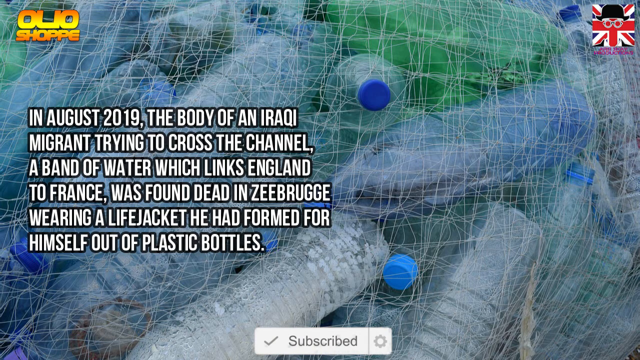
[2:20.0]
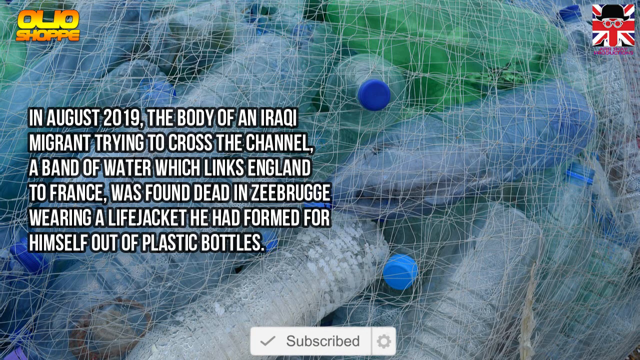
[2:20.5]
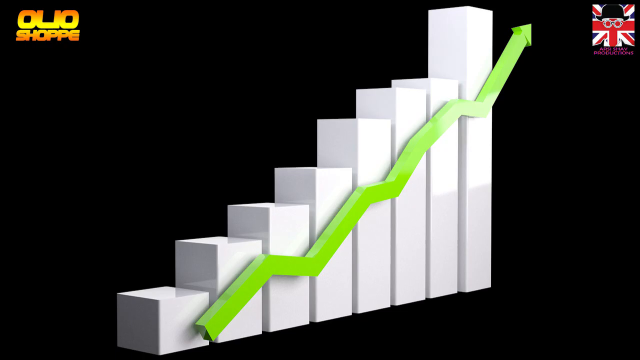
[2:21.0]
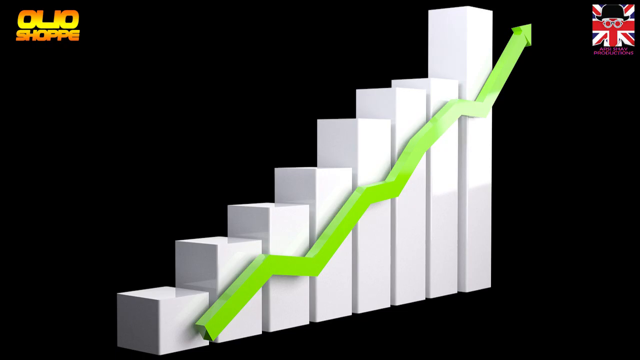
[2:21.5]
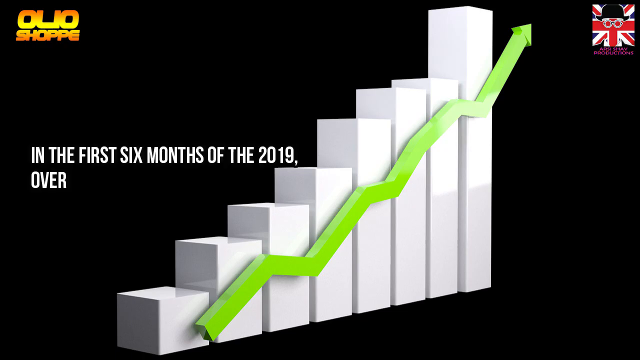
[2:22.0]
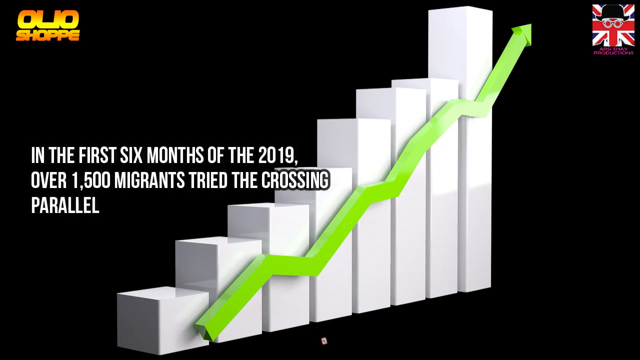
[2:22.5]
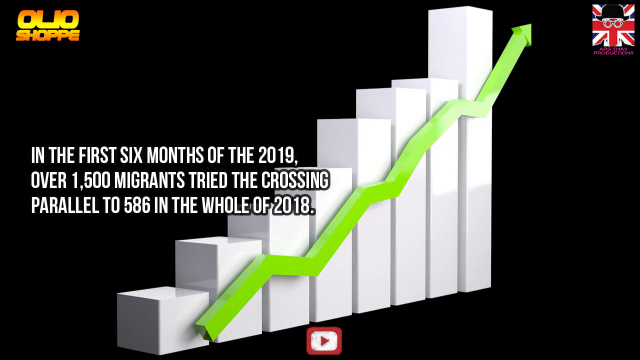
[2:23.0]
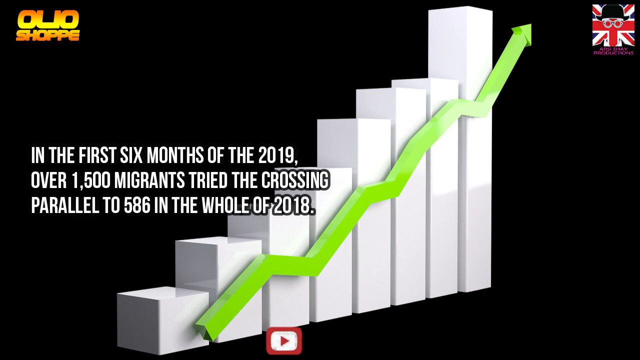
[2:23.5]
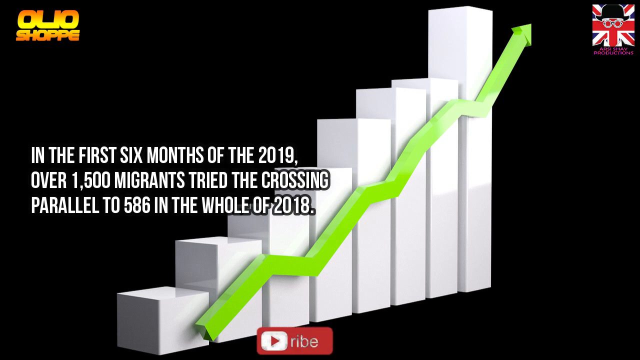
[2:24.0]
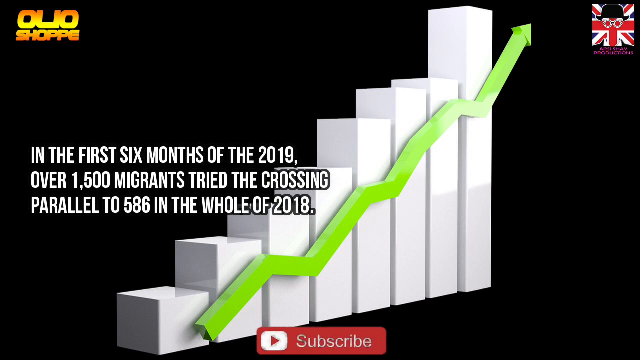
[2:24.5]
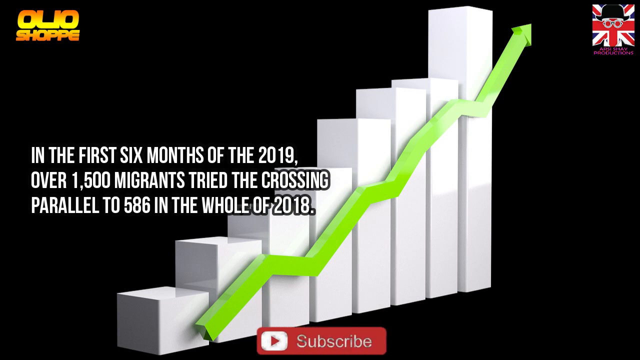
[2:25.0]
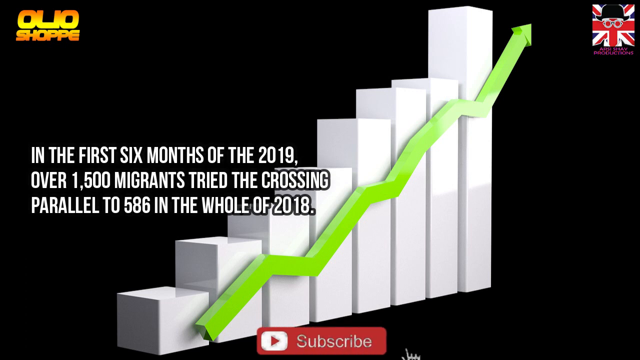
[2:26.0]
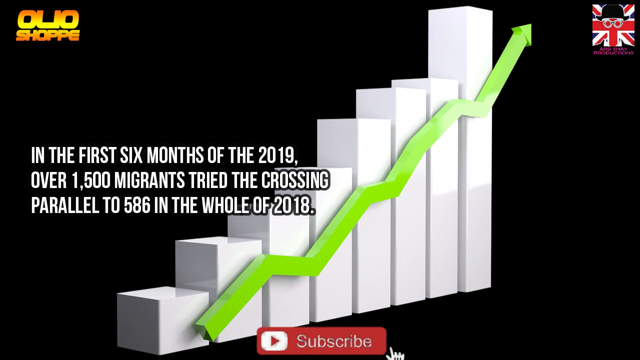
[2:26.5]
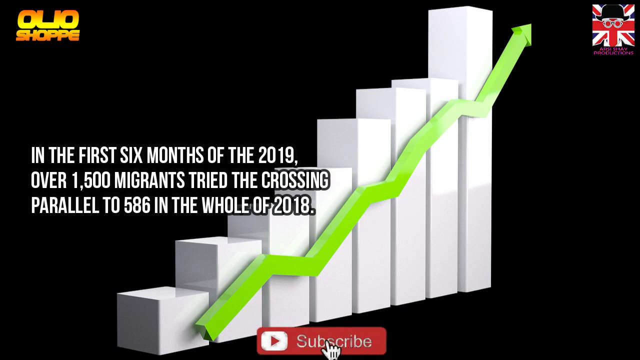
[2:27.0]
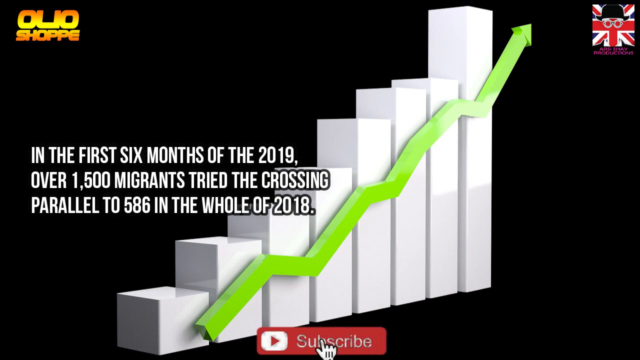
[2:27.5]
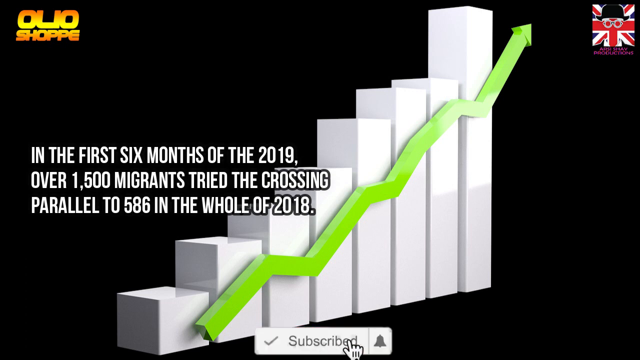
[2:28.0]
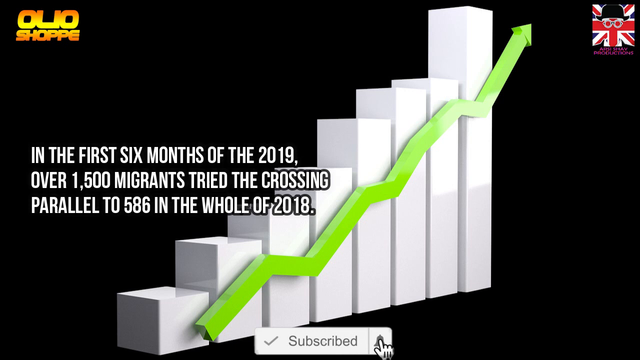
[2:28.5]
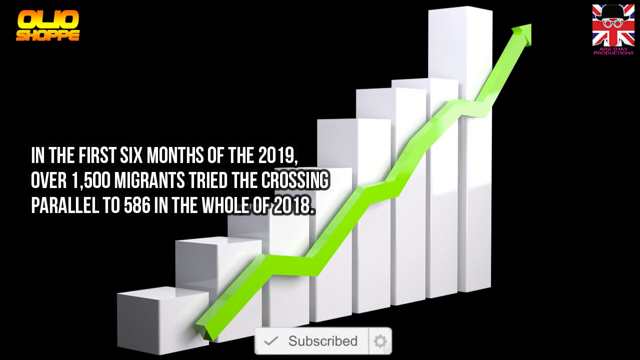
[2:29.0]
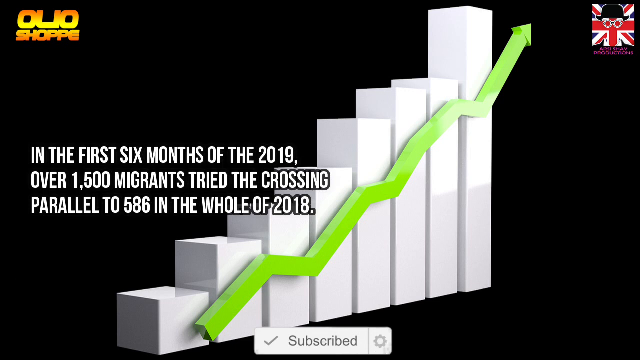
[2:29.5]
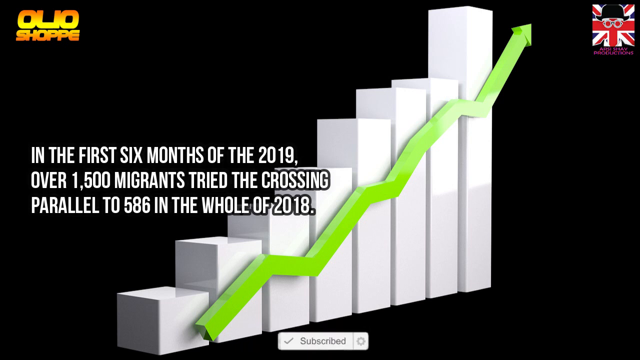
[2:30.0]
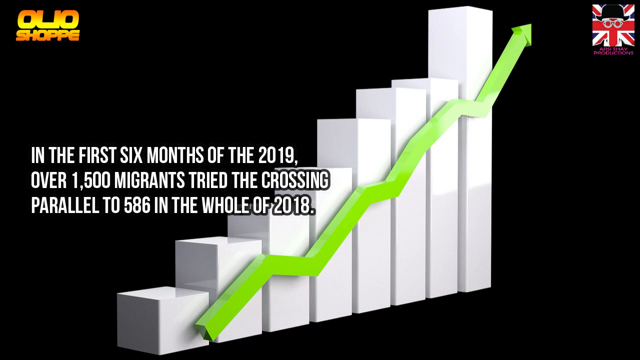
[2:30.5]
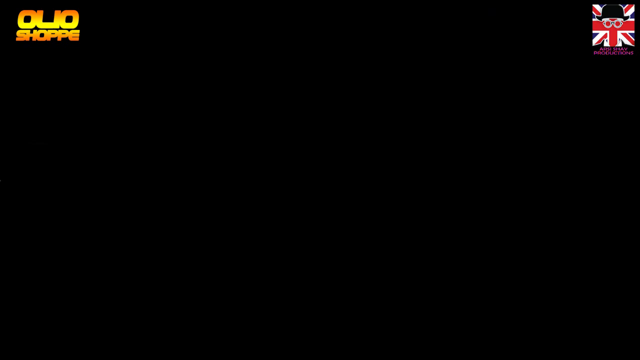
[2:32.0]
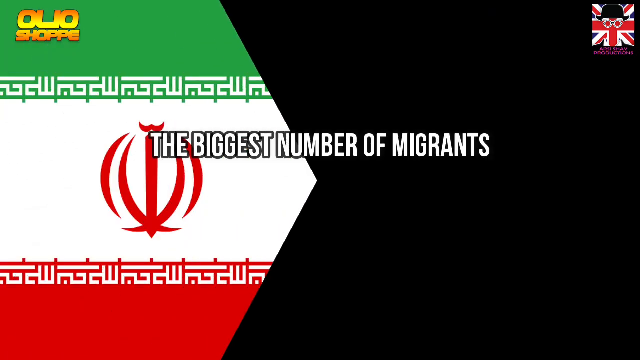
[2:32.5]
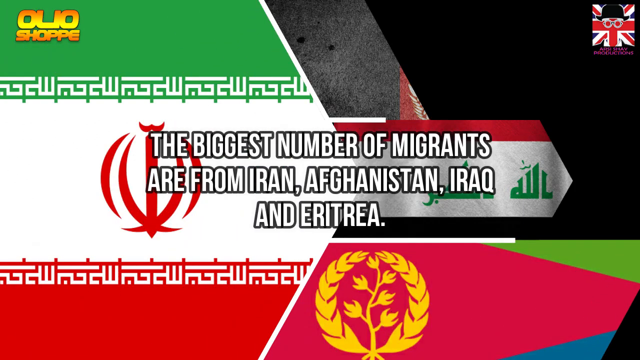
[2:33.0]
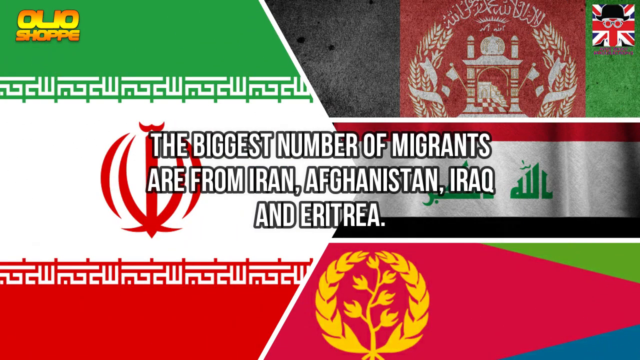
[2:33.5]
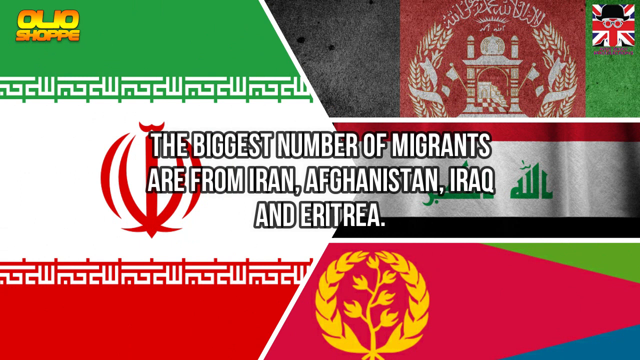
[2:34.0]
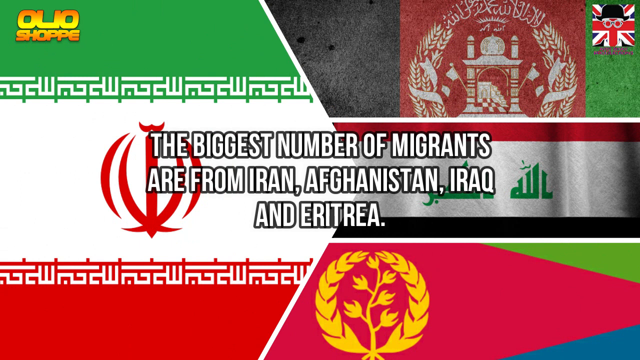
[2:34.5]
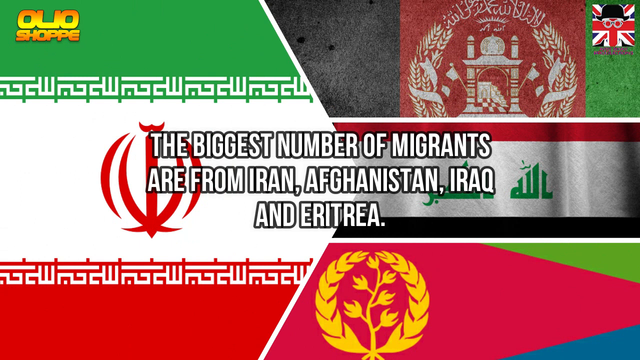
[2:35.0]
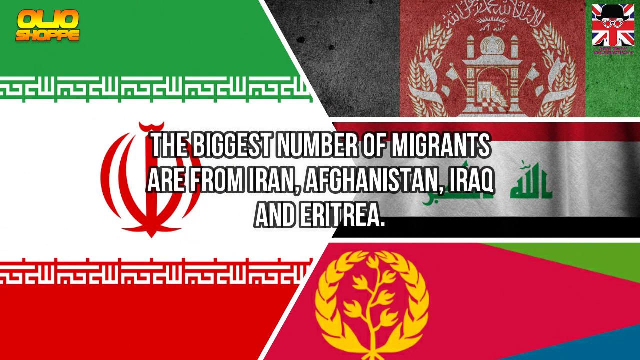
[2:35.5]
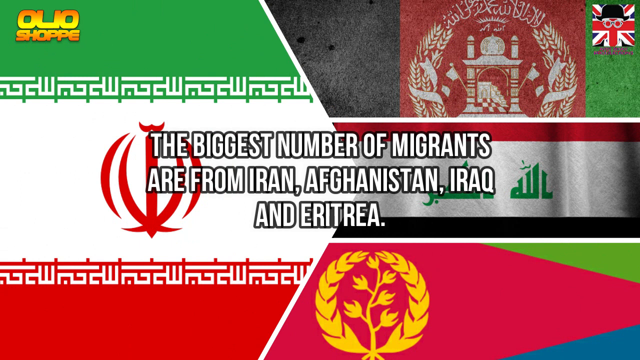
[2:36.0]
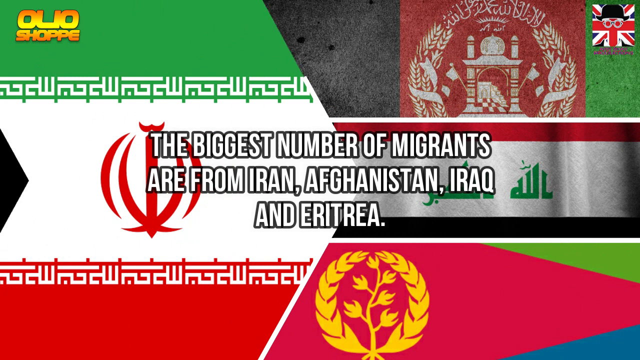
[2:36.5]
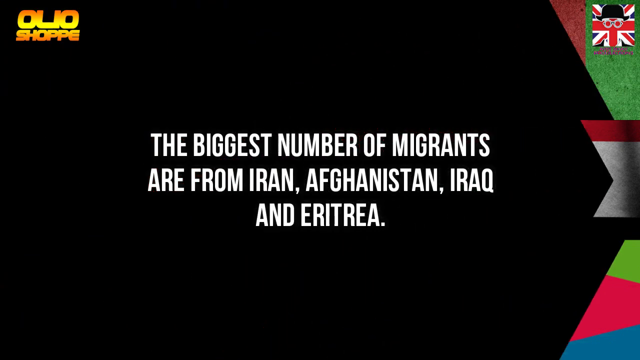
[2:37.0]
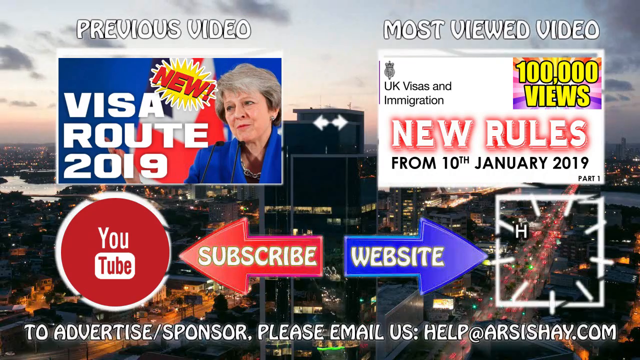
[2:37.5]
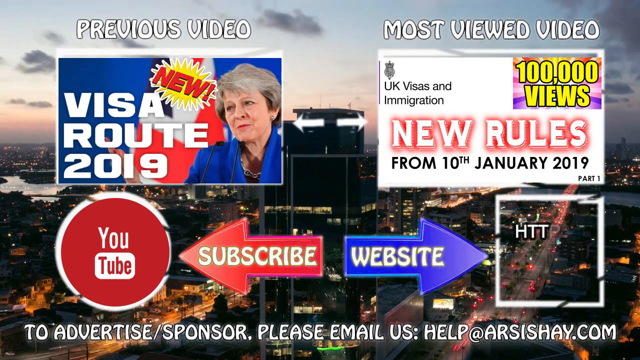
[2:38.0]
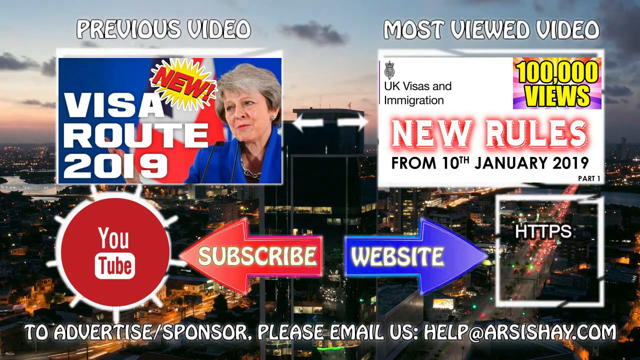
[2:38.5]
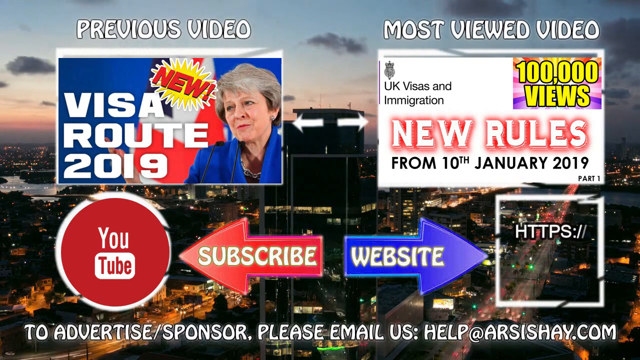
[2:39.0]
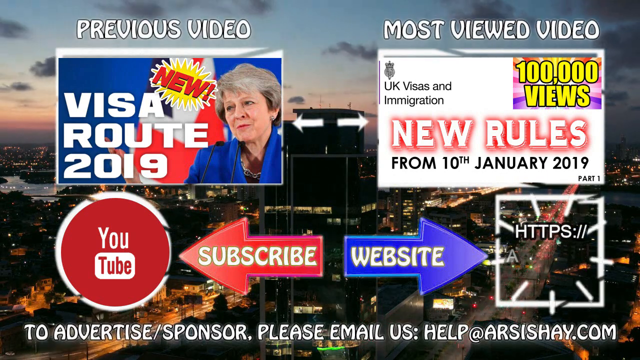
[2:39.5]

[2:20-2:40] A three-dimensional bar graph appears: white bars rising progressively, with a green arrow over them pointing upward as the trend rises. The graph is angled back a little, as if its right side has been pushed back, so it is not a straight side view, and it sits on a black background. White text on the left reads "in the first six months of the 2019, over 1,500 migrants tried the crossing parallel to 586 in the whole of 2018." Black then goes across the screen to a new graphic of flags. White text in the middle reads "the biggest number of migrants are from Iran, Afghanistan, Iraq, and Eritrea," and these apparently are four flags shown, though which is which is unclear. The flag on the left is green on top, with what almost looks like Arabic patterns, then a big white band with a red logo in the middle, then a red band at the bottom with the same white pattern along its top. The upper right flag is black, red, then green, with a white logo in the middle featuring a little arch surrounded by leaves. The middle flag is horizontal red, white and black, with green Arabic writing in the middle. The lower right flag is green and red, with a yellow laurel-leaf logo to its left. The three flags on the right are separated from the flag on the left by an angled line like a very wide V, starting a little left of center at the top, coming in halfway, and angling over to the left at the bottom. A black swipe then crosses the screen, bringing in a new graphic that looks like maybe an ending graphic.